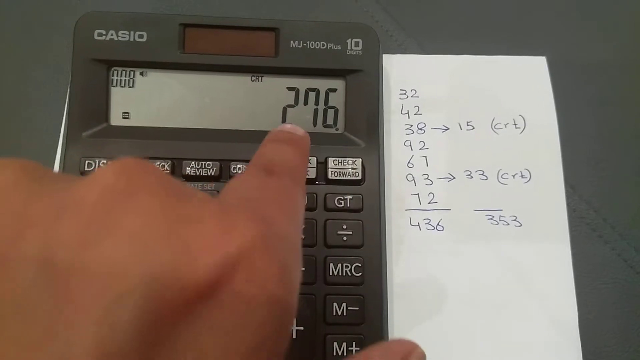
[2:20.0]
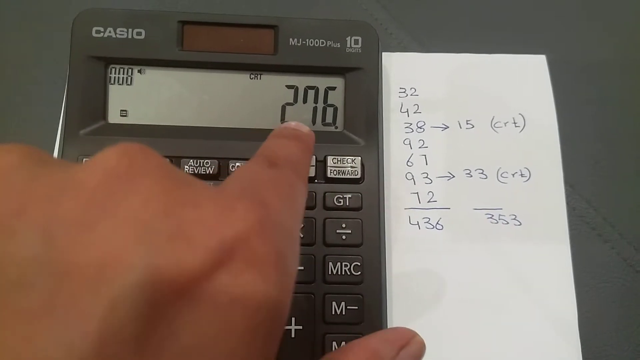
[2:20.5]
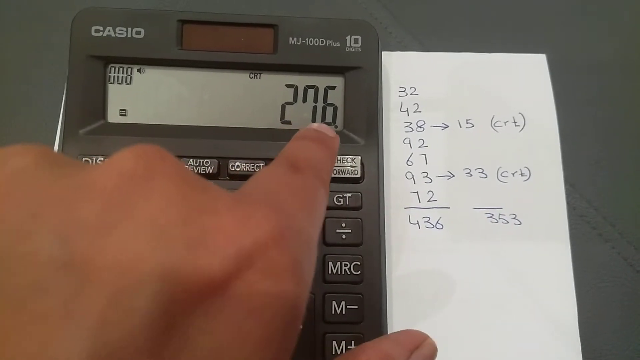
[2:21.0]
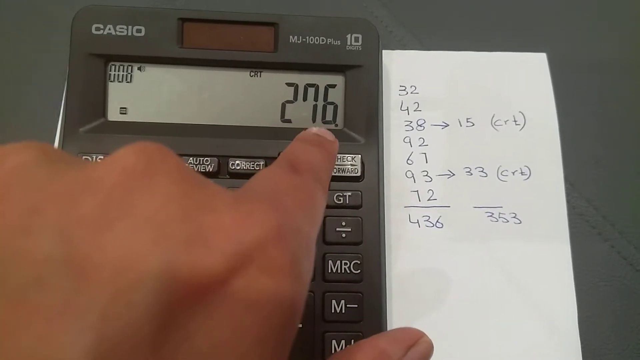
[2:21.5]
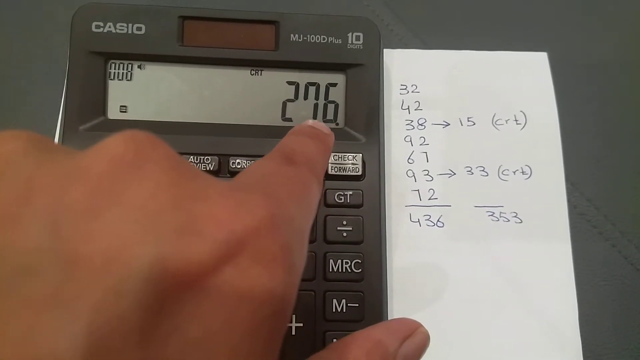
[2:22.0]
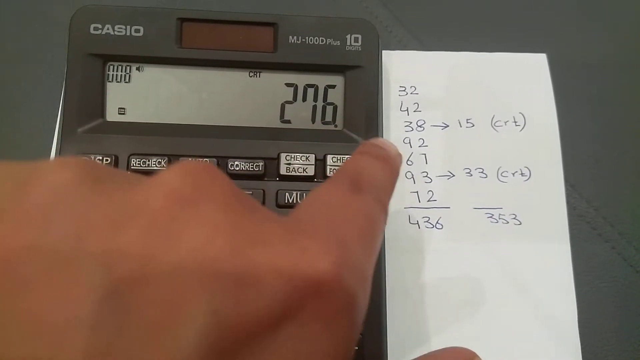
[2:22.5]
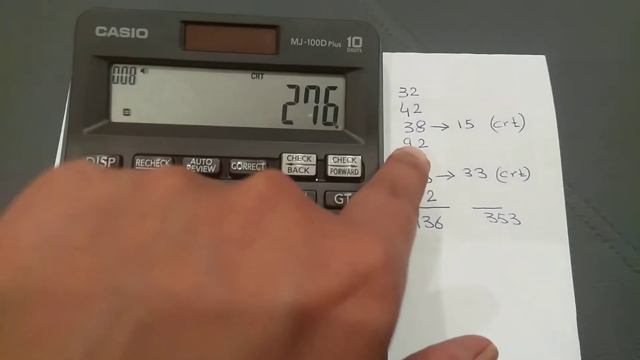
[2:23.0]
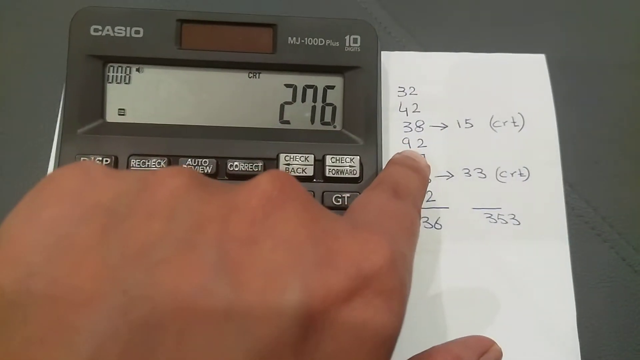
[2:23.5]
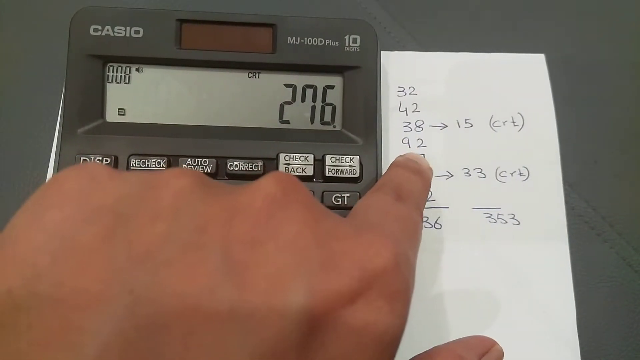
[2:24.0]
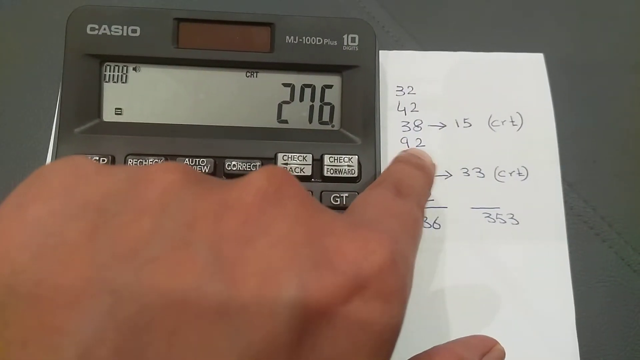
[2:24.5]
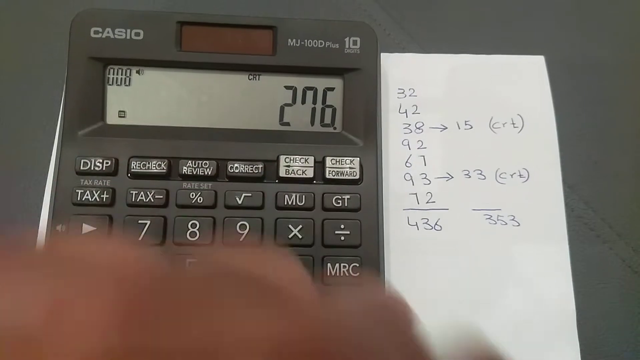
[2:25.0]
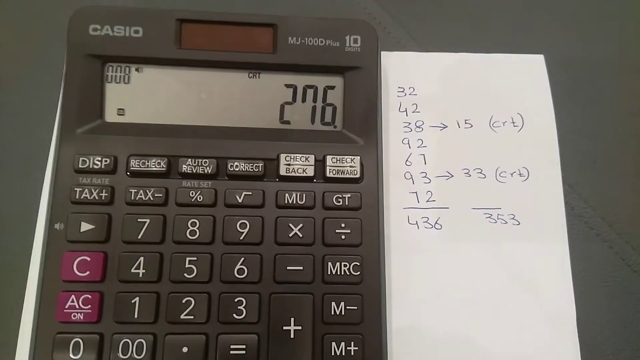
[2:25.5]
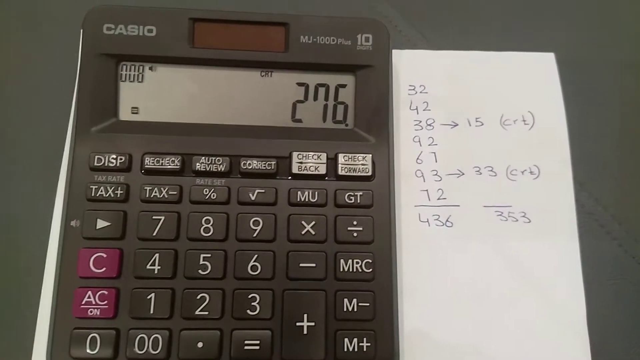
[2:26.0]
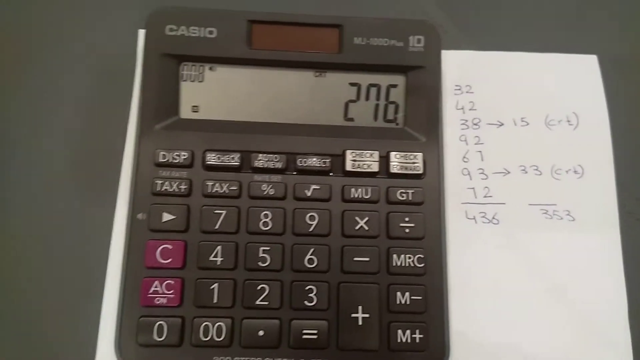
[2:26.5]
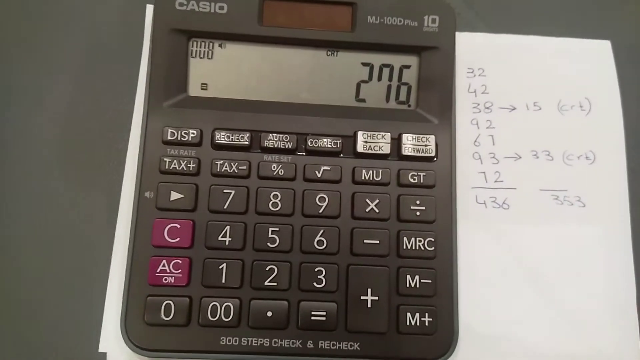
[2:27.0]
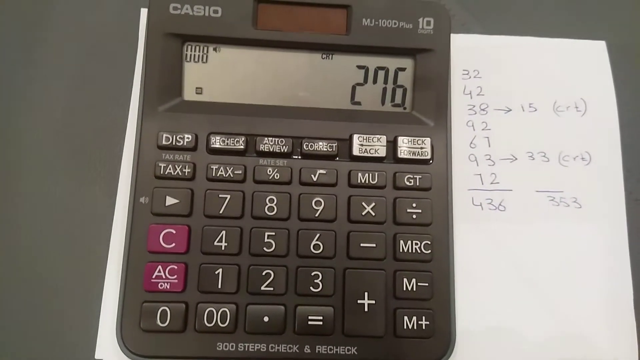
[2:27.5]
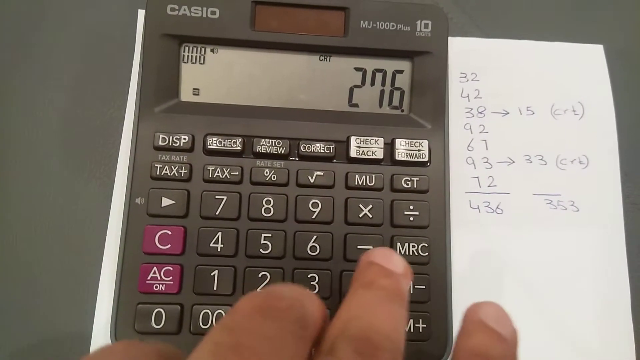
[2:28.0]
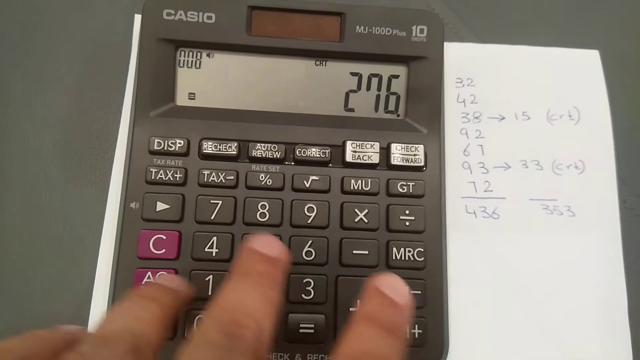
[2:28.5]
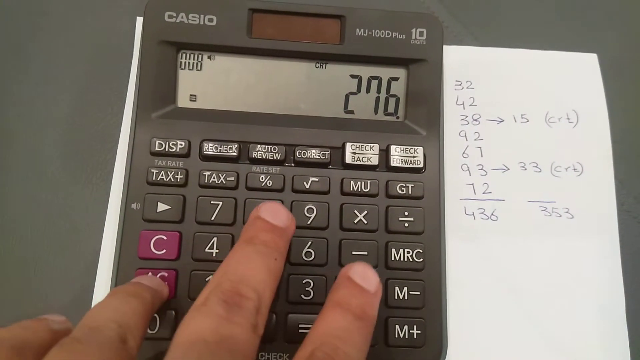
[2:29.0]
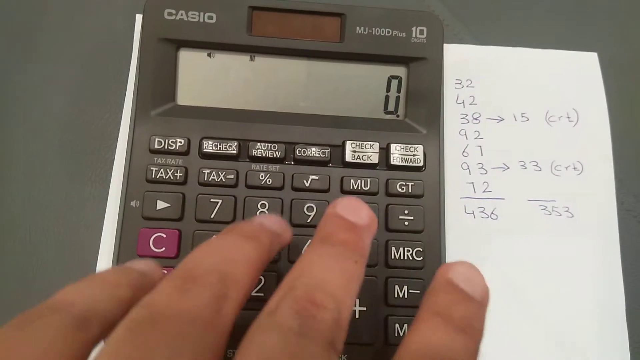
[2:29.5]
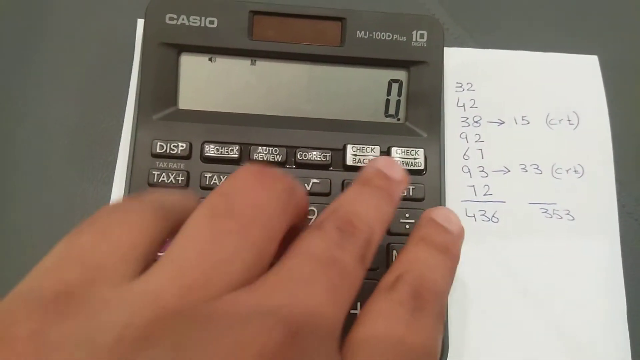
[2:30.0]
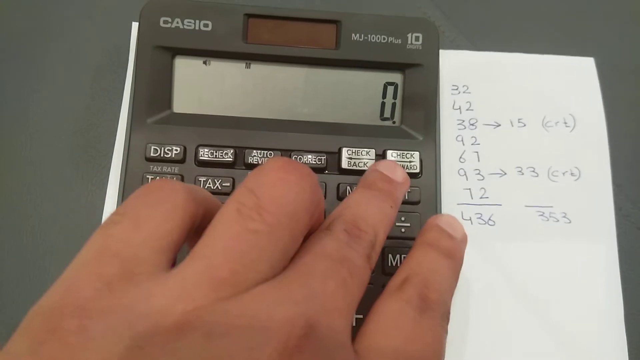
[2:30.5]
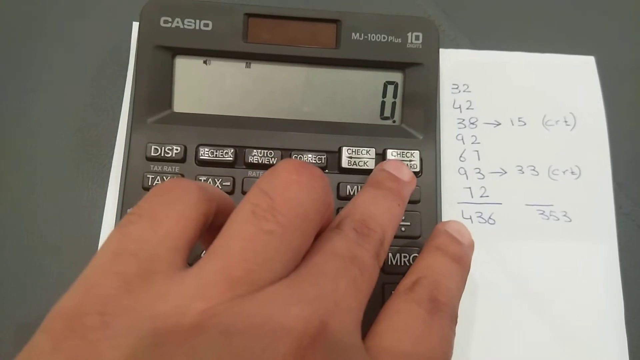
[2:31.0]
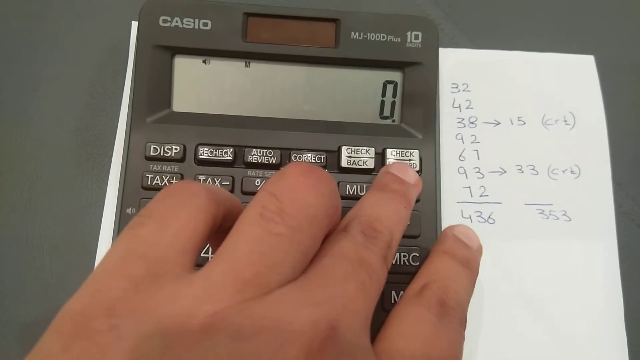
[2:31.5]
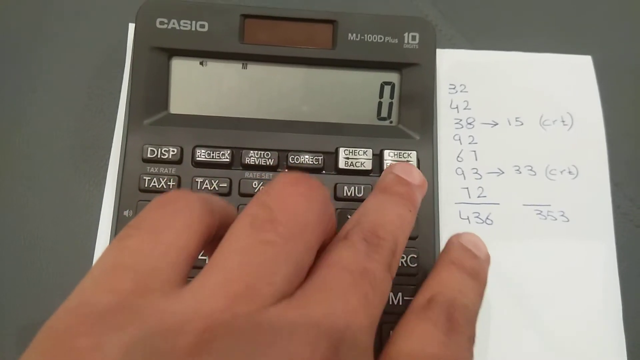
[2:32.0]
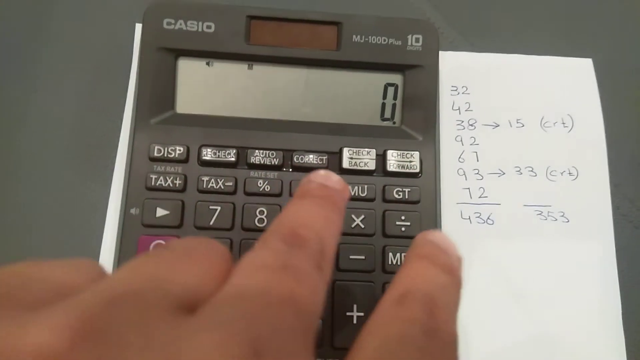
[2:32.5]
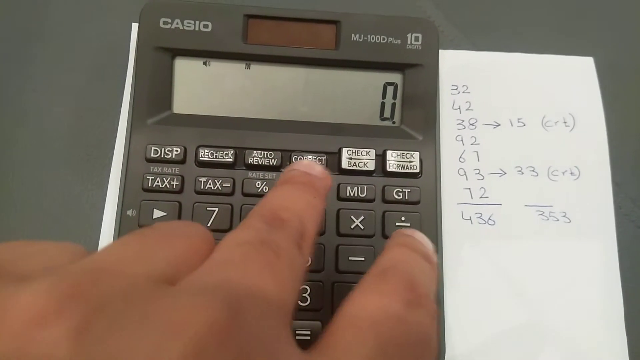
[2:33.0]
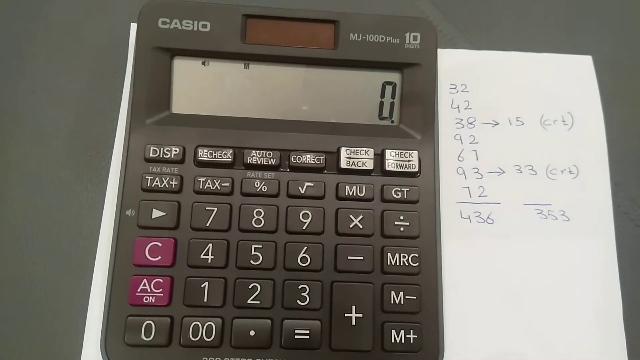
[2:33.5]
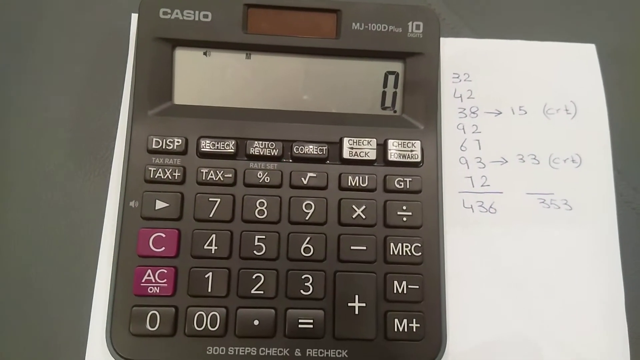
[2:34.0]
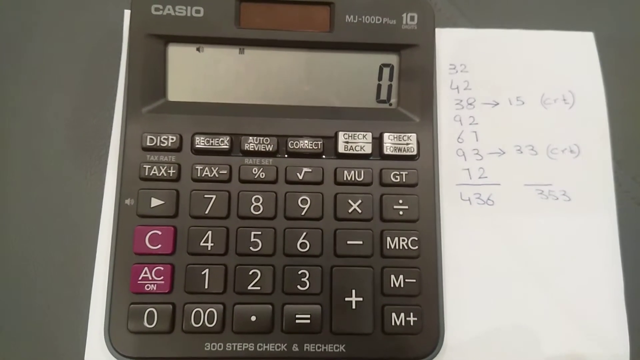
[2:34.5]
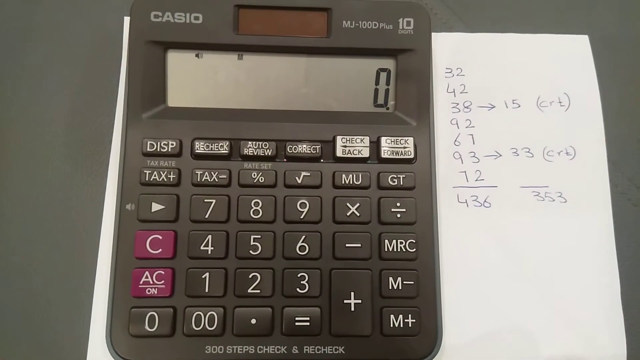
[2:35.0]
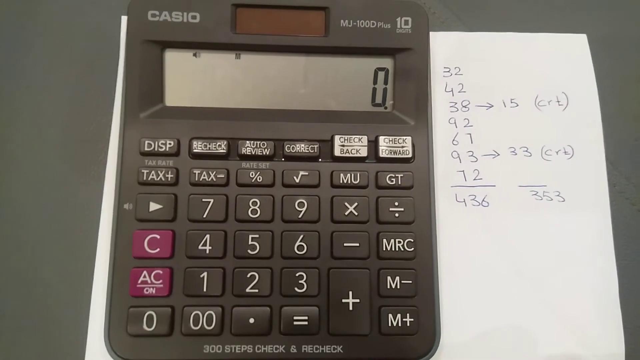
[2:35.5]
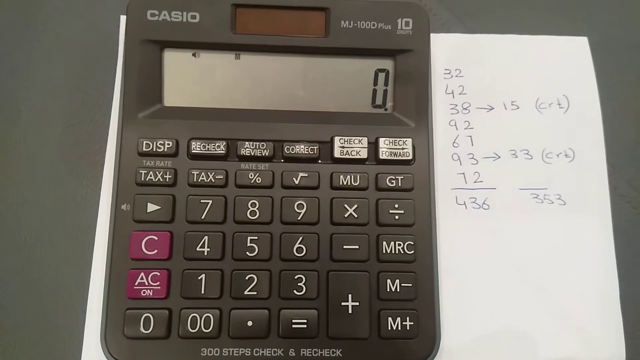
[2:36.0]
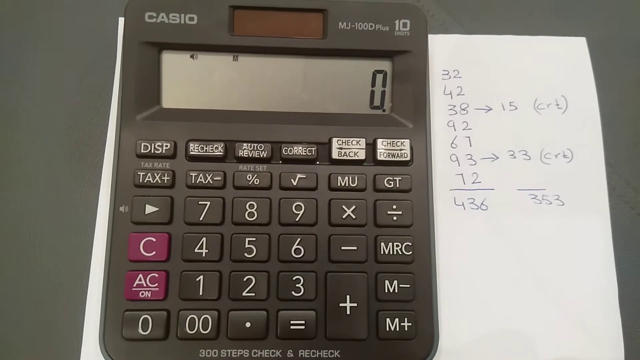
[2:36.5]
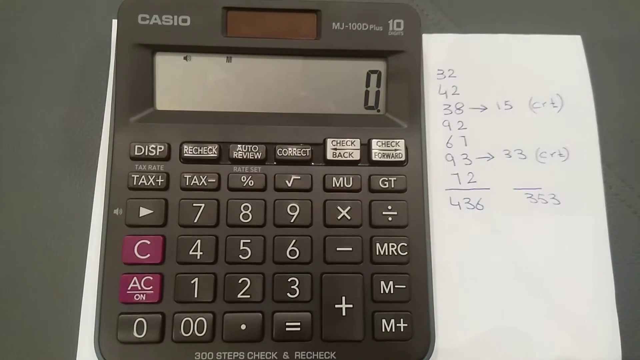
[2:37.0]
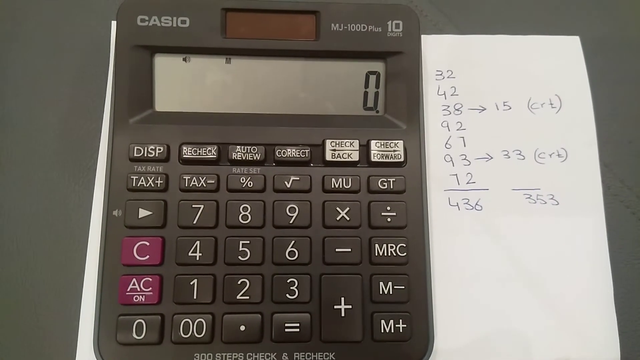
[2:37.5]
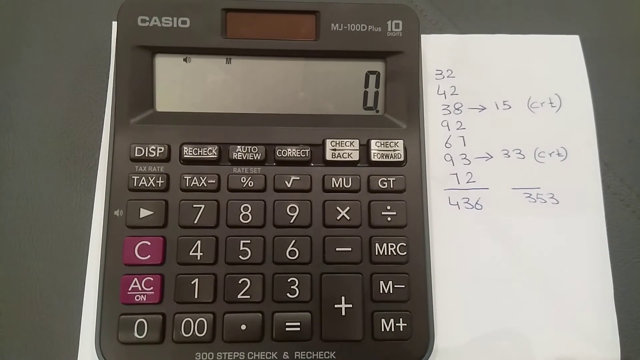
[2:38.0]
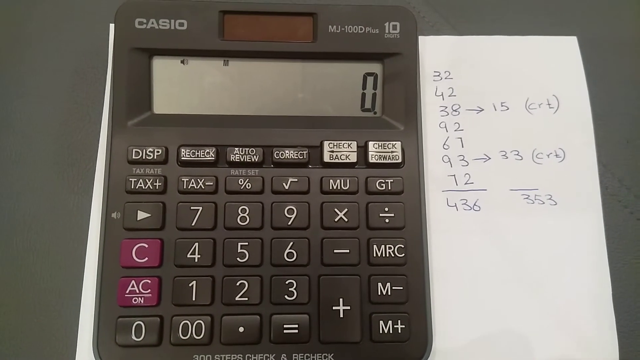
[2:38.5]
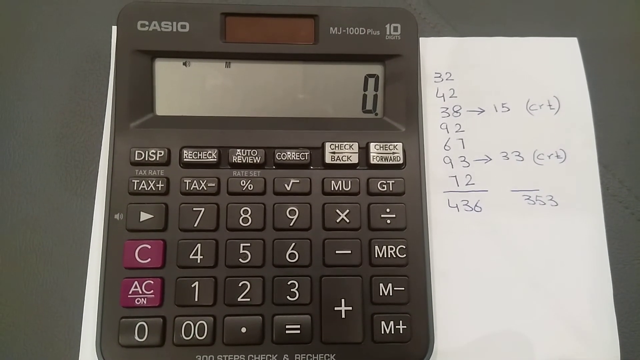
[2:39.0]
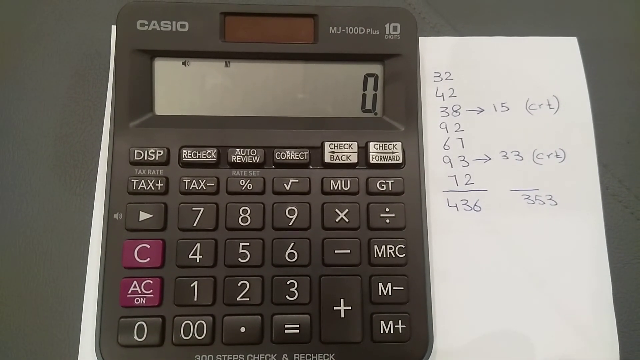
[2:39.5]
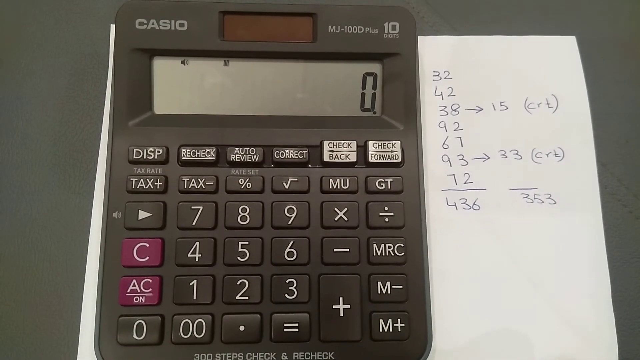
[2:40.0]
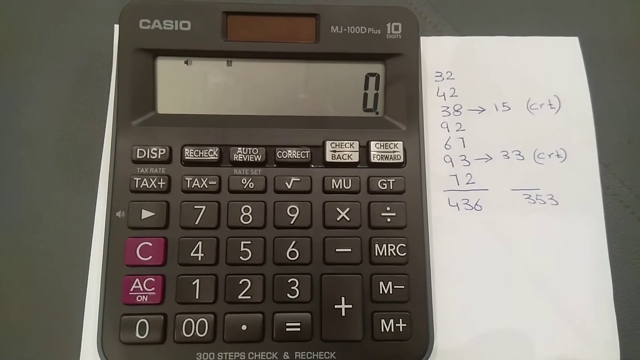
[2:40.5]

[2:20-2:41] A black calculator is laying on a dark gray surface, with a hand to the left and a white sheet of paper to the right. The paper has a list of numbers written one underneath the other in an addition problem. The display starts at zero. The person points to the check forward button, the last button on the top row, which has a white surface with gray words. Then they go two buttons to the left, to a button labeled "correct", which is gray with white letters, and point to it as well. Then they go to the list of numbers: 32, 42, 38, 92, 61, 93, and 72, followed by a line with "total 436" written underneath. The number 38 is third on the list and has an arrow pointing to the right, followed by the number 15 and "CRT" in brackets. Further down, the number 93 has an arrow pointing to the right, with the number 33 and "CRT" to the right of it. Under those is another line with the number 353 written underneath. They hit the red AC button, which brings the calculator back to zero. They click check forward and it shows 32, again and it shows 42, and a third time and it shows 38. They select the correct button, put in 15, and hit check forward, and 92, the fourth number on the list, comes up. They continue down the list this way. When they reach 93, they hit the correct button, type in 33, and select check forward, which brings up the last number on the list, 72. They select check forward one more time and the number 436 shows up again.